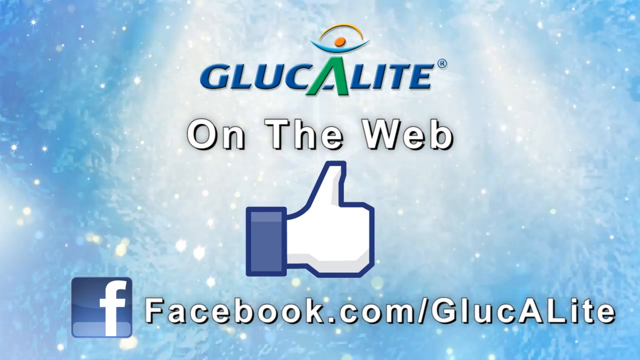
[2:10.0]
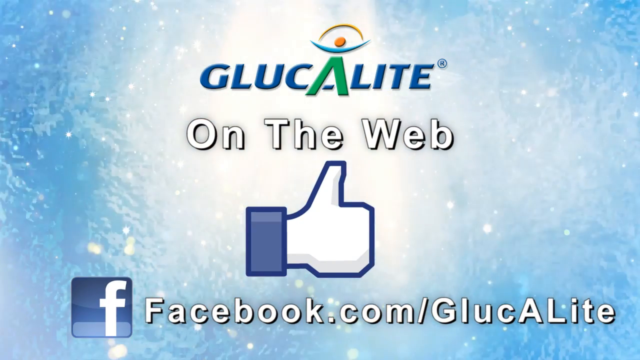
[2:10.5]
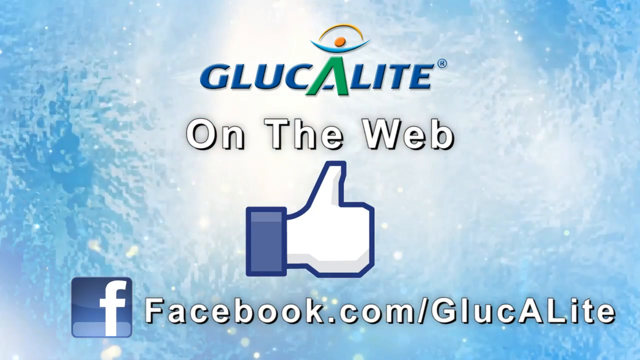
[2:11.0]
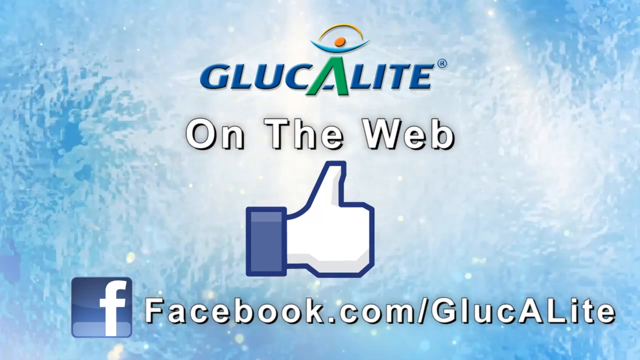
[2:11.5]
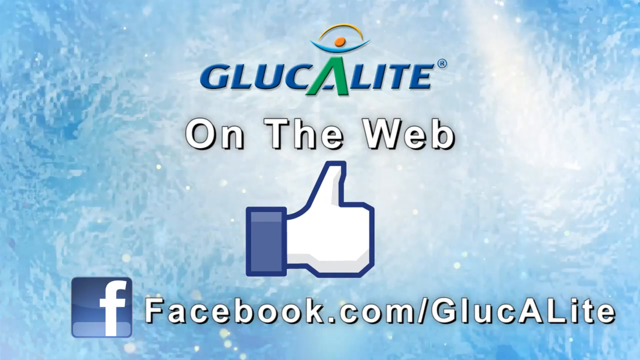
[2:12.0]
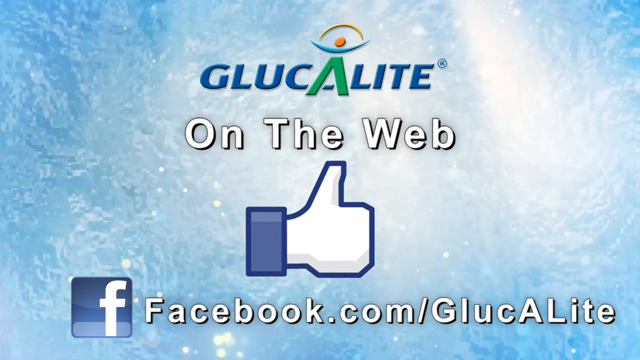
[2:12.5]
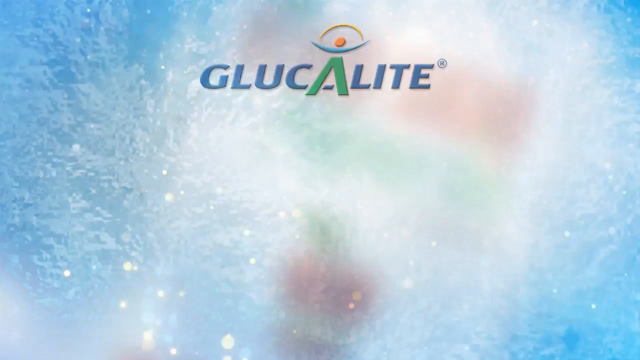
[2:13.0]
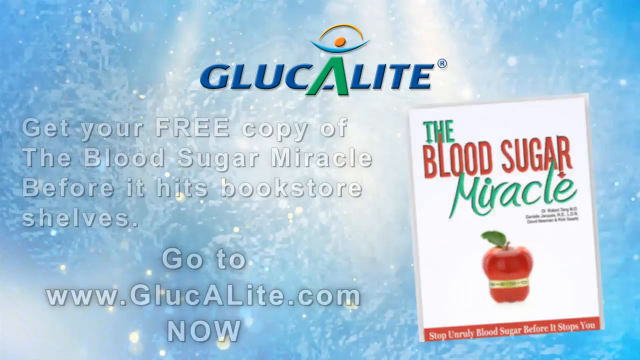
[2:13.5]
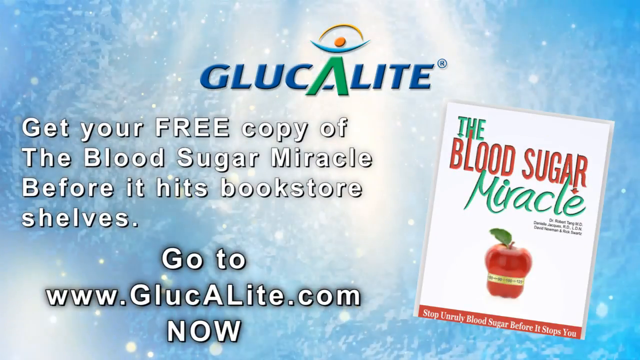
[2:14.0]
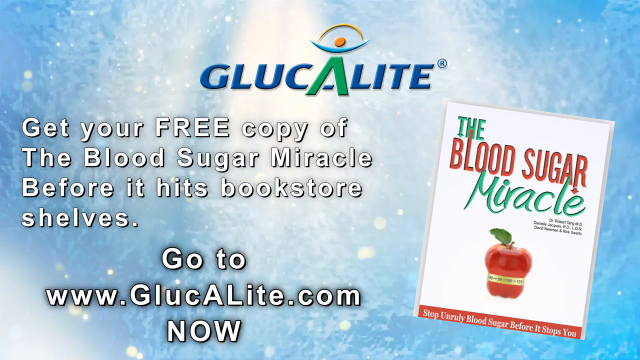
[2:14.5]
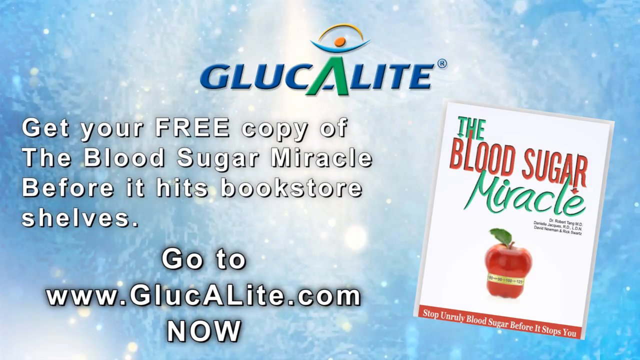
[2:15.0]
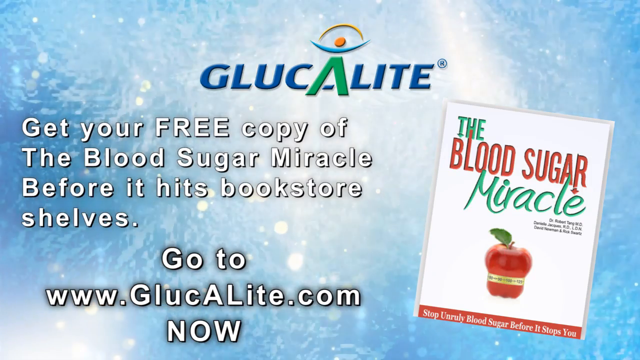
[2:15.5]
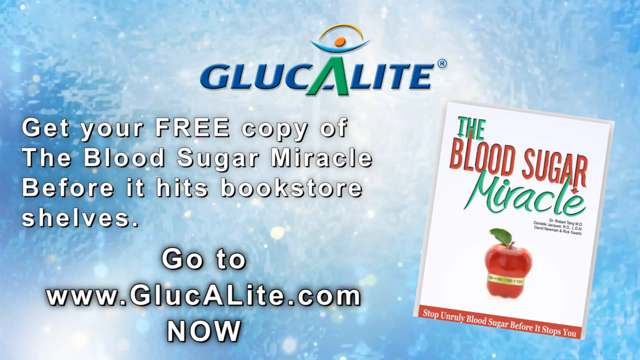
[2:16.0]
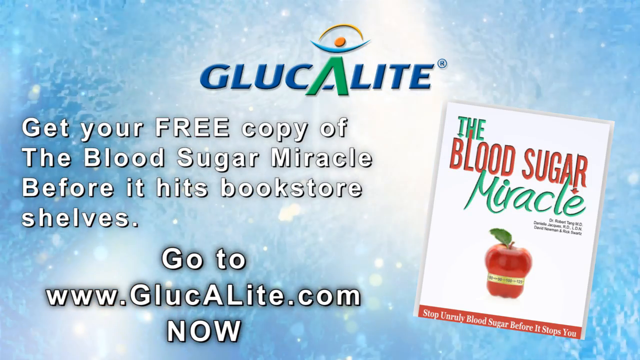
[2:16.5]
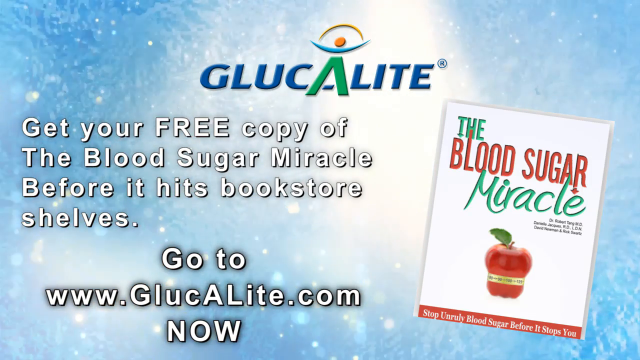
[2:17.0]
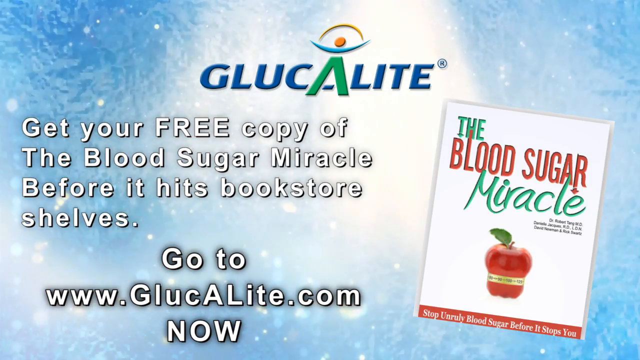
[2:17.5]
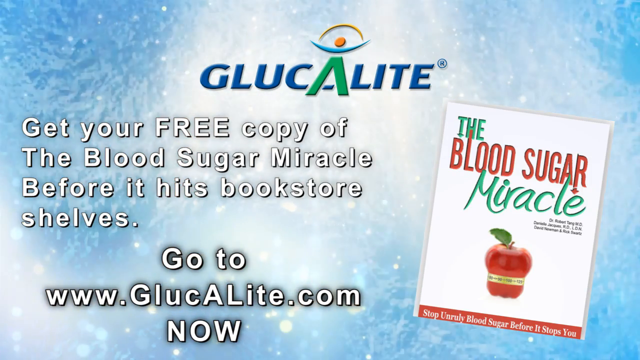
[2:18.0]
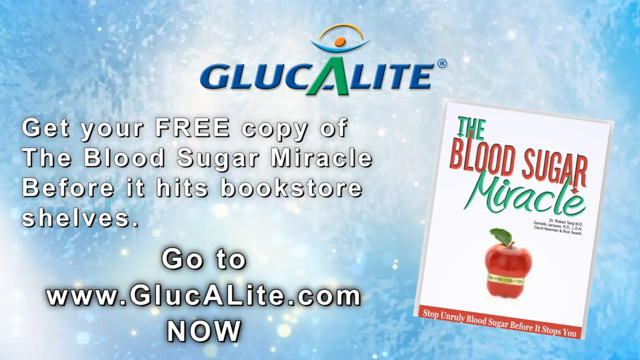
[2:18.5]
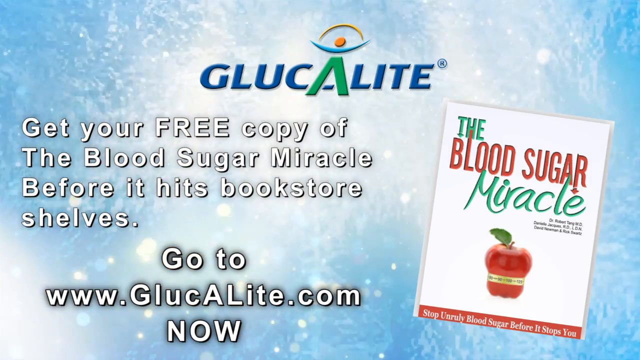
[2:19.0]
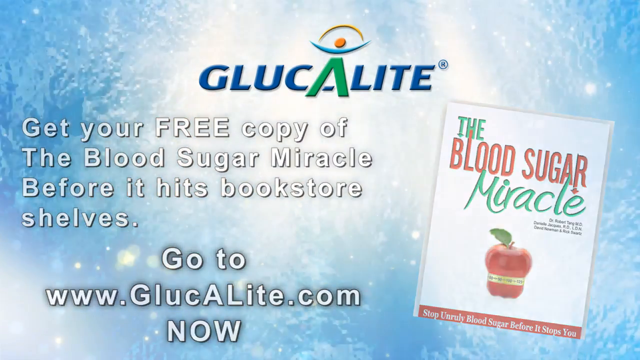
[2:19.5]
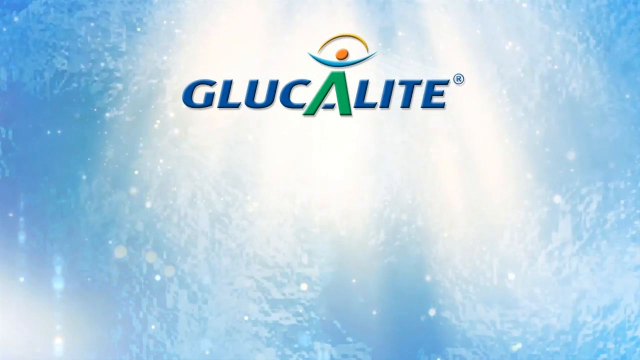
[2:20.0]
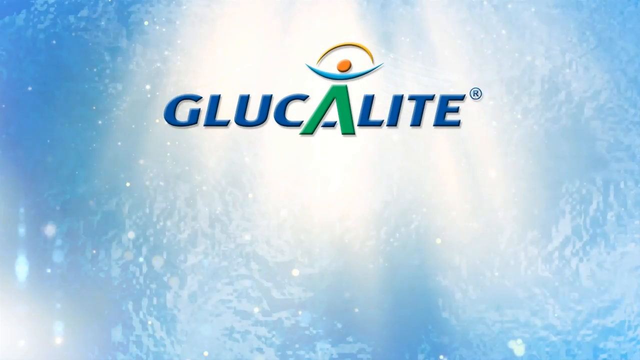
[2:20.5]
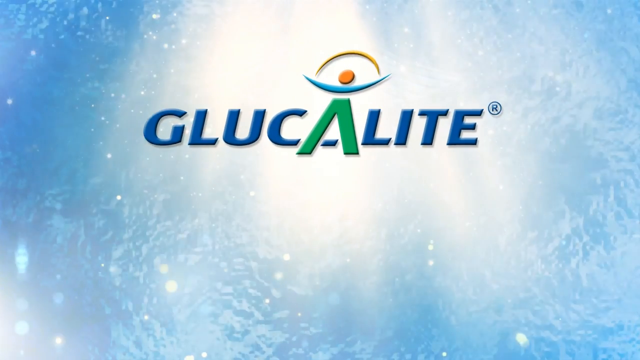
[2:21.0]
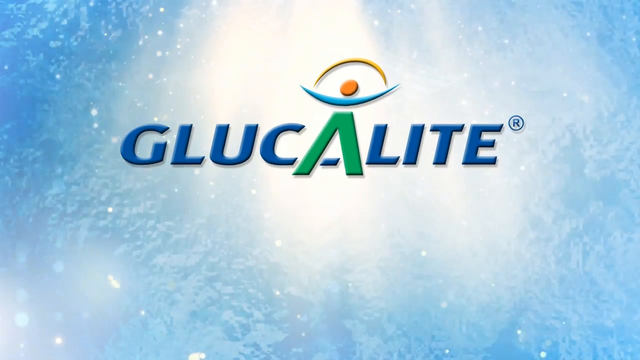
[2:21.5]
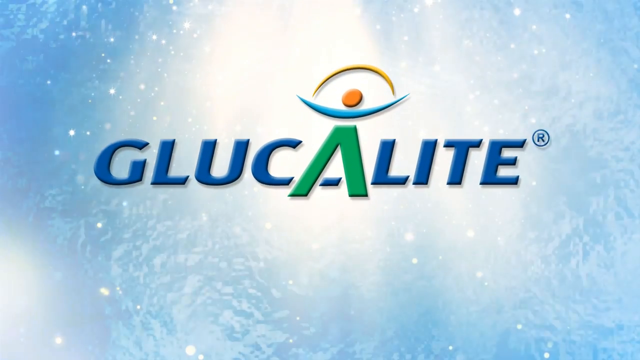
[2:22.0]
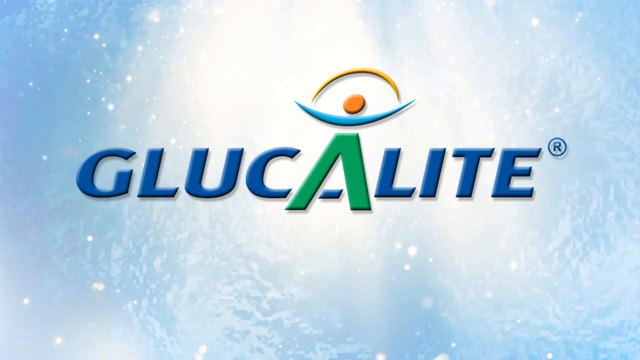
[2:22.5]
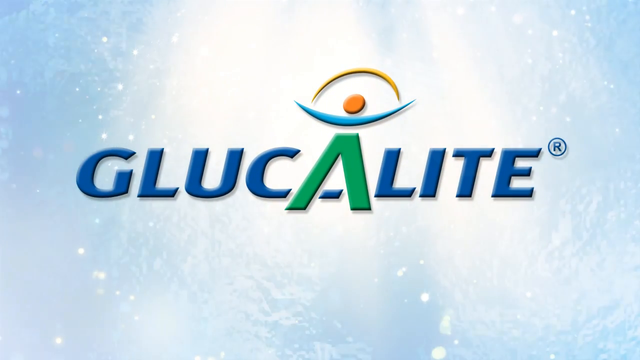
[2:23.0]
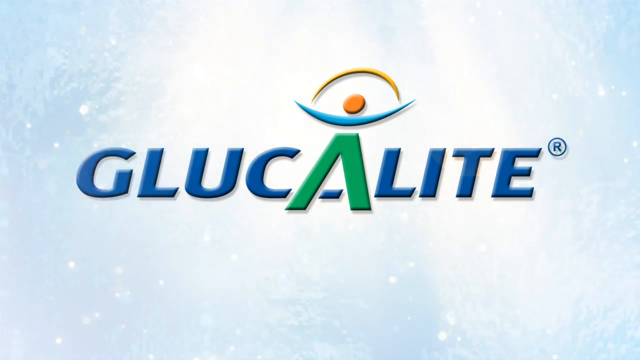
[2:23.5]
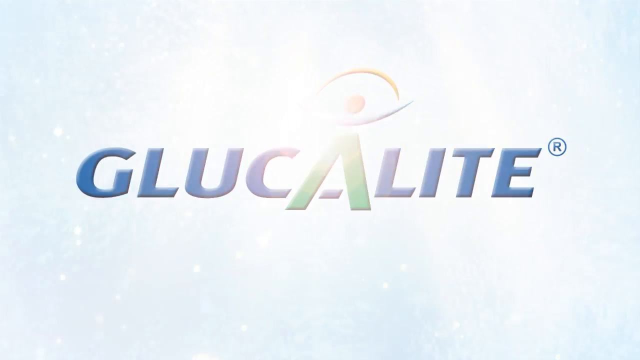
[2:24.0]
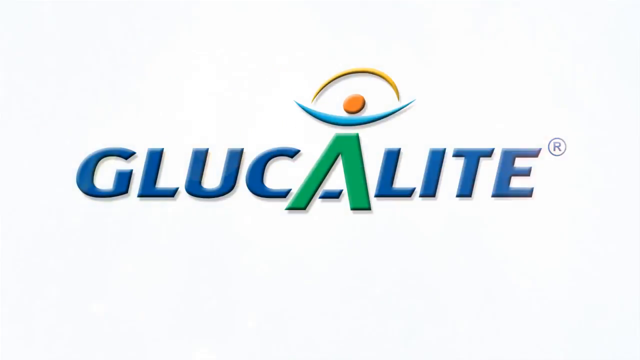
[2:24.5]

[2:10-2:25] The Glucolate logo appears, looking like it could be copyrighted. All the letters except the A are blue; the green A forms the legs of a sort of stick figure, with a wide upturned arc like a smile above it, a dot forming a head, and above the head another arc angled like a rainbow toward the ends of the first arc. It says "on the web" with the Facebook thumbs-up symbol and the Facebook logo with "Facebook.com/Glucolate." Next, text on the left side of the screen reads "get your free copy of the Blood Sugar Miracle before it hits the bookstore shelves go to www.glucolate.com now," while on the right a book spirals in, titled "the Blood Sugar Miracle." The cover has an apple whose middle is drawn in, maybe by a belt or tape of some sort, and red words at the bottom. Throughout this, the background looks like light shining in. After everything else disappears, the Glucolate symbol remains and comes closer, growing larger.